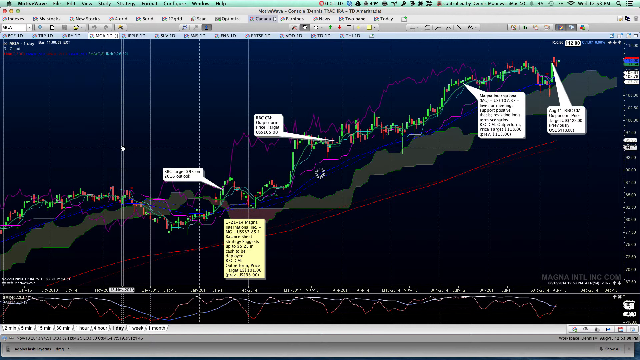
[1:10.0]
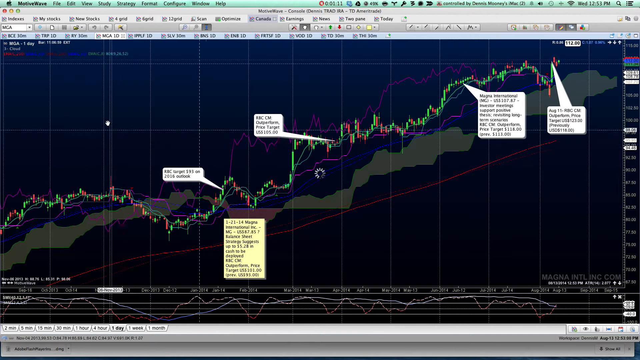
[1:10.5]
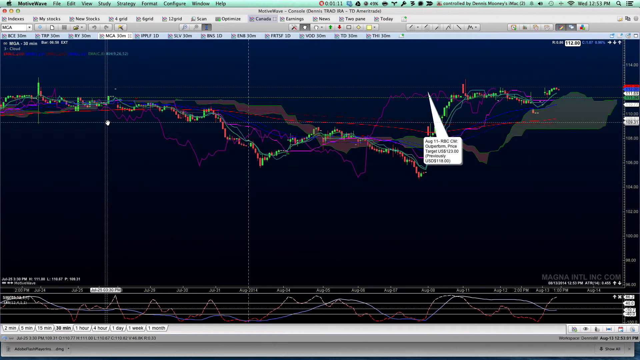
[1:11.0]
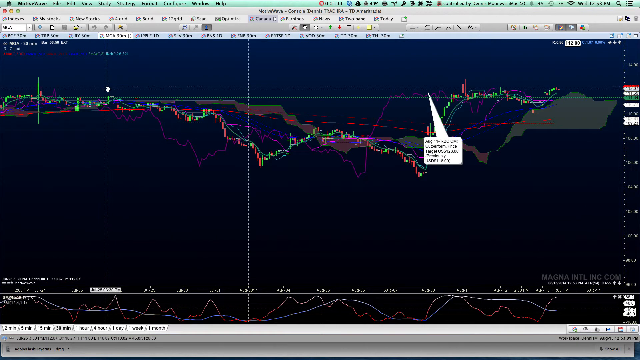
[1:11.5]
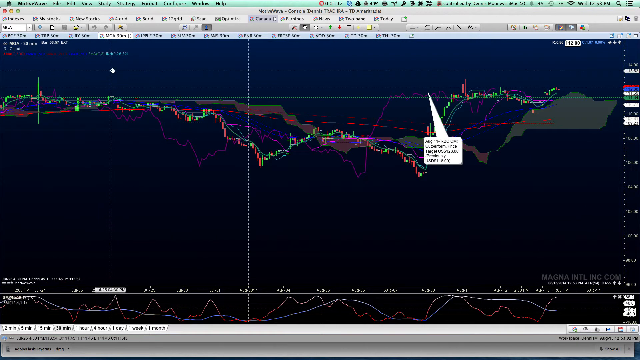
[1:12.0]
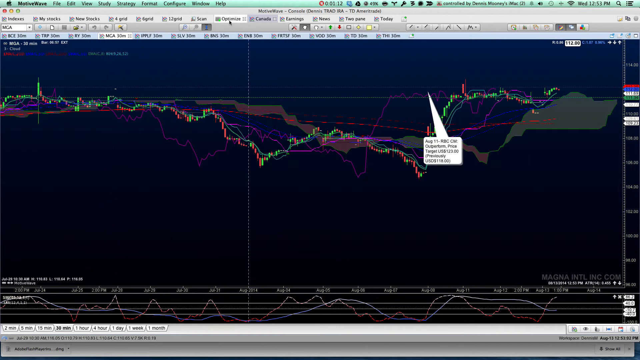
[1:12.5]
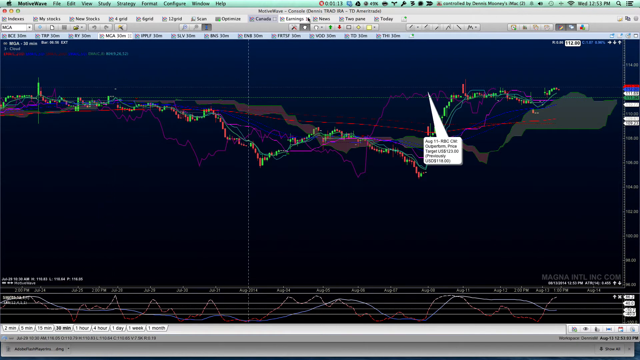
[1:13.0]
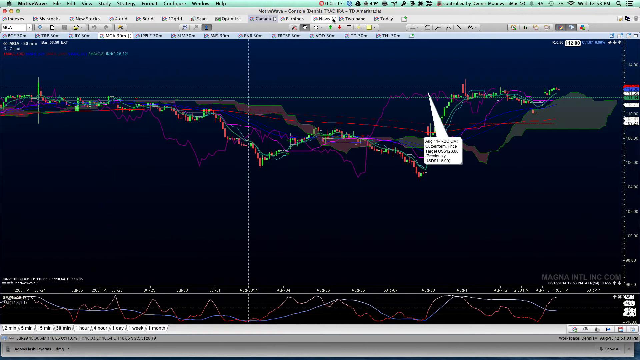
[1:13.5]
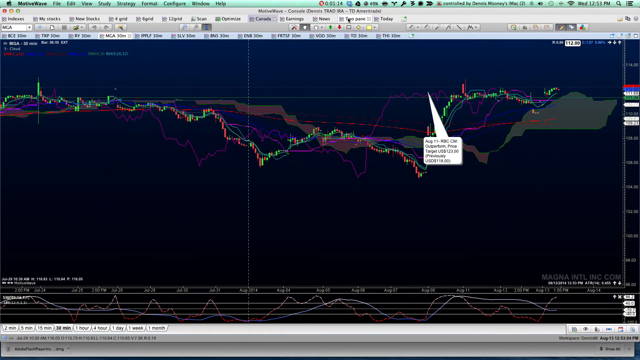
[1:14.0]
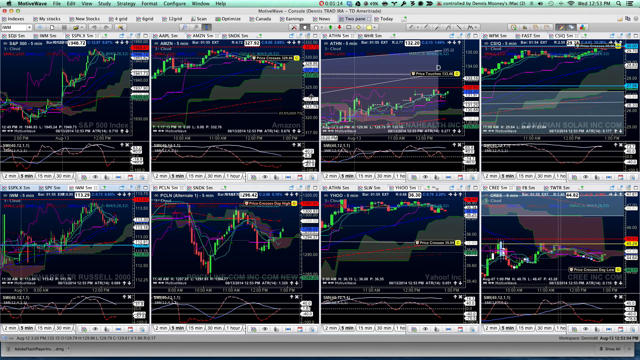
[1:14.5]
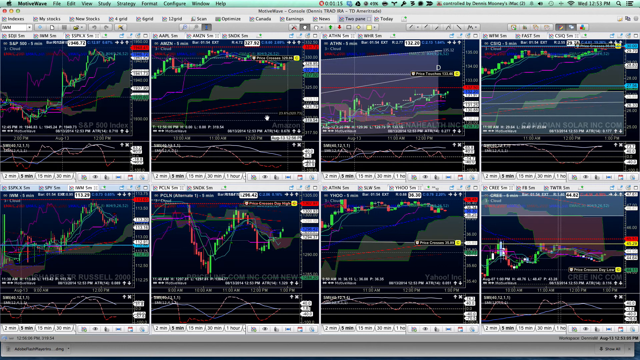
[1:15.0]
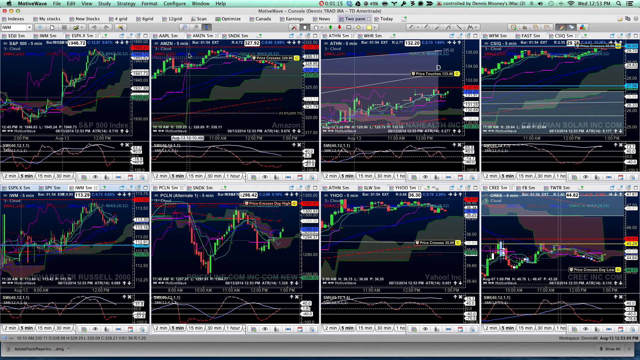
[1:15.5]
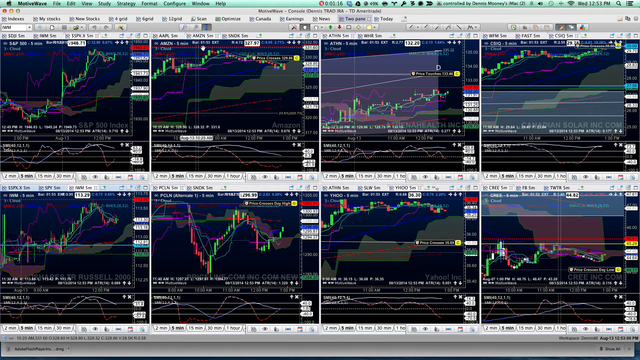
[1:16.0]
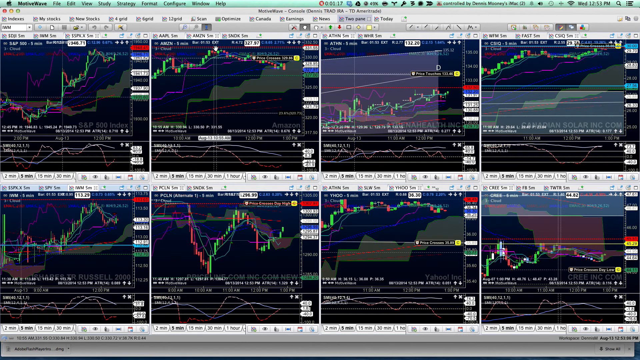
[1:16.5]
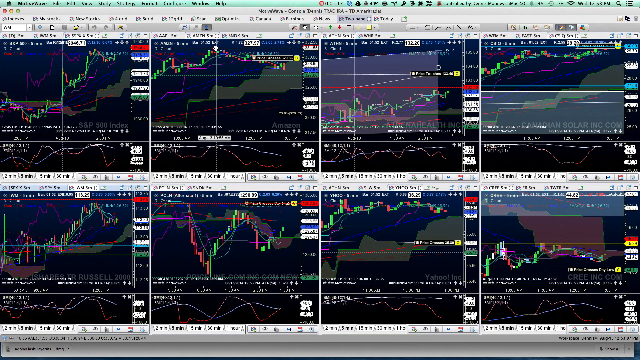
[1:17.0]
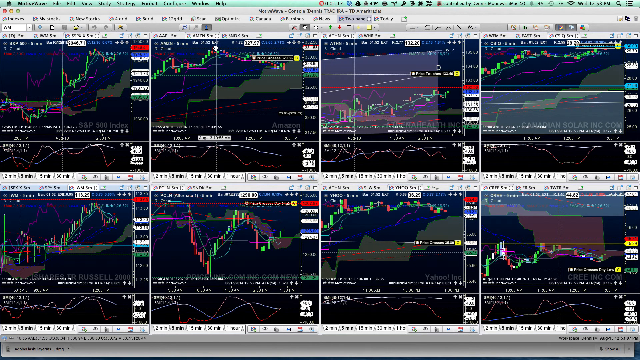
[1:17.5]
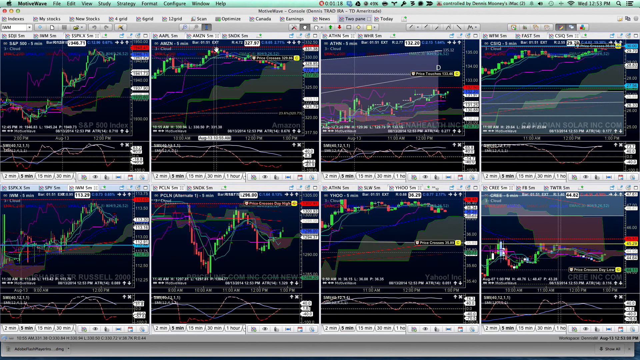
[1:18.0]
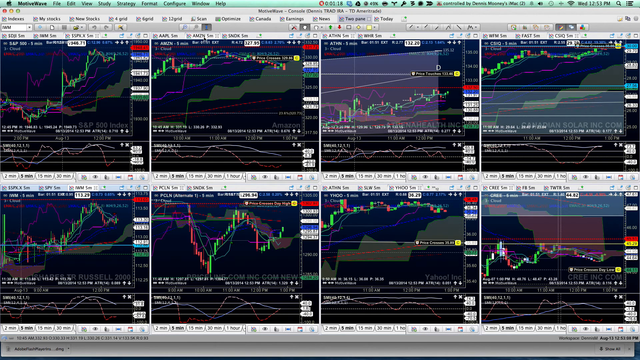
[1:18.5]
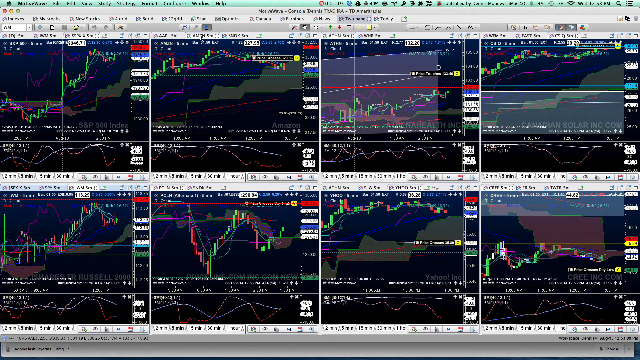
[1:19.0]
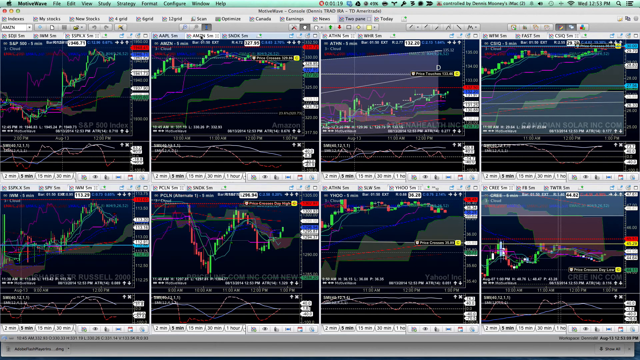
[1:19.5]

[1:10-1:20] The candle chart has changed and now shows possibly a different chart, or possibly a different point in time. This one has a more gradual decrease over the first half, then climbs back up about three-fourths of the way from where its big decrease began near the middle of the view. About halfway up it stops and goes back down to a slightly lower spot than before, then climbs back up toward the end of the chart, rising above its original starting point. One arrow points to a spot above it with text written on it, but the text is too blurry to read. The view then goes back to all the charts, and the user clicks on another one, which zooms in a little.